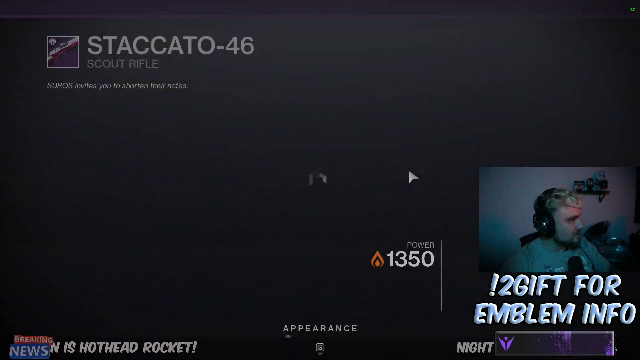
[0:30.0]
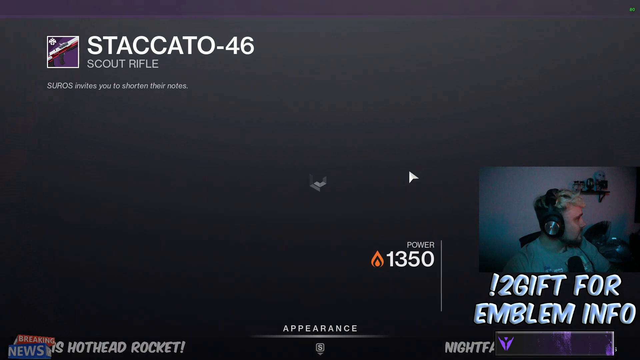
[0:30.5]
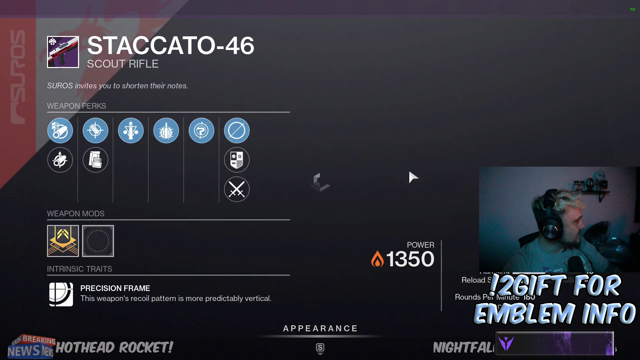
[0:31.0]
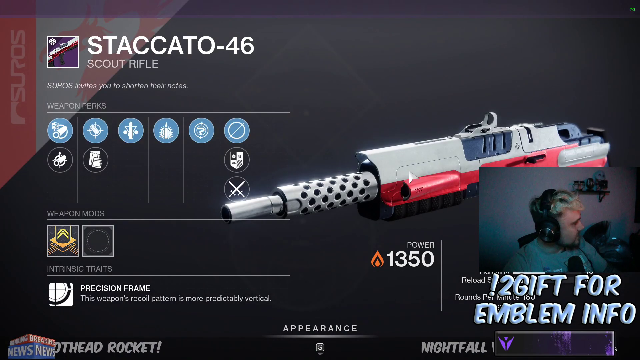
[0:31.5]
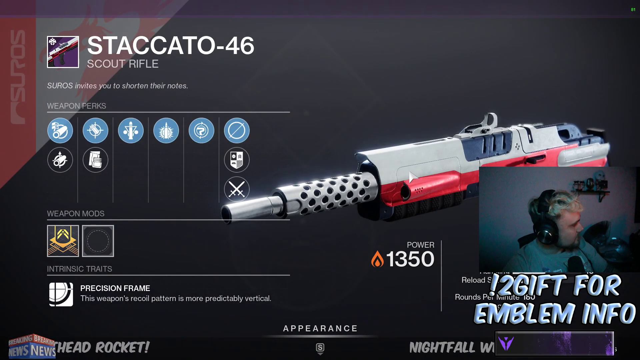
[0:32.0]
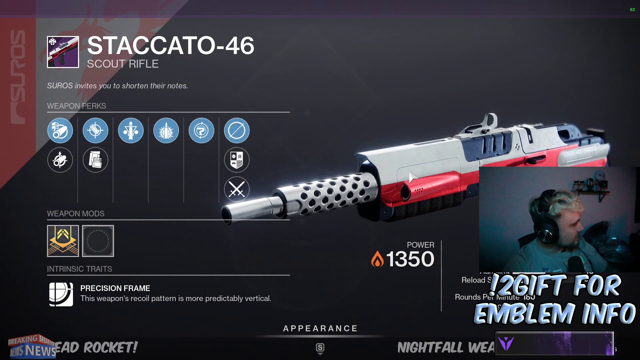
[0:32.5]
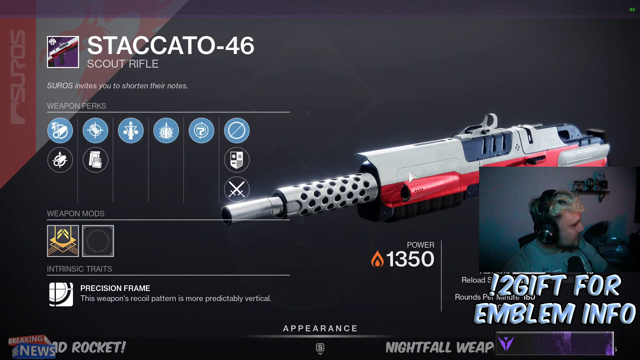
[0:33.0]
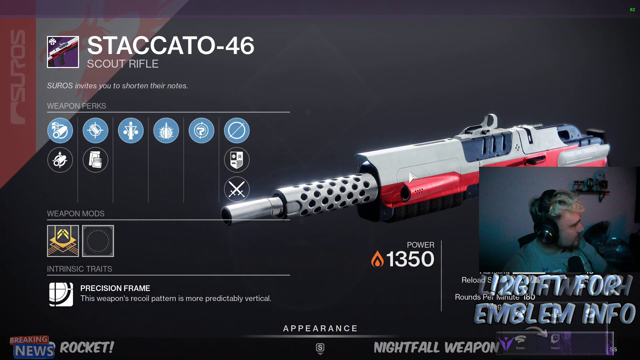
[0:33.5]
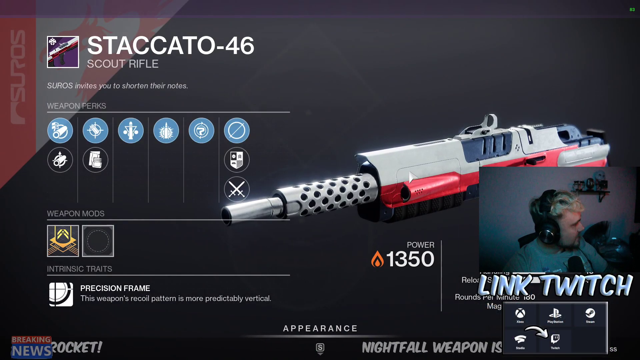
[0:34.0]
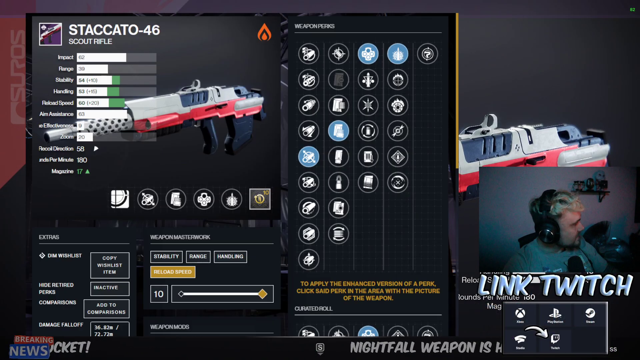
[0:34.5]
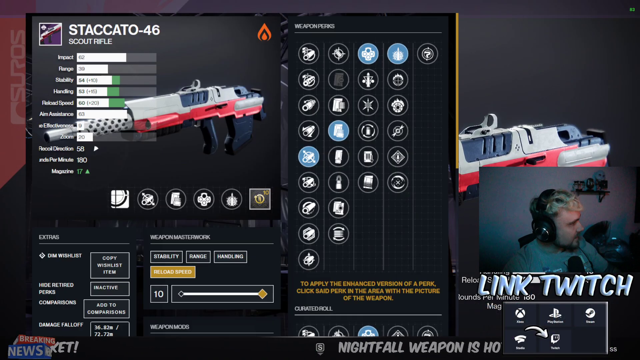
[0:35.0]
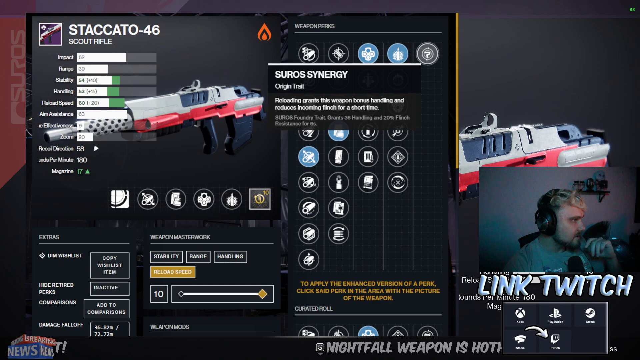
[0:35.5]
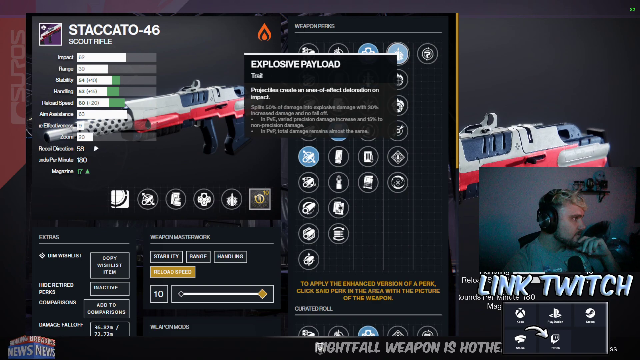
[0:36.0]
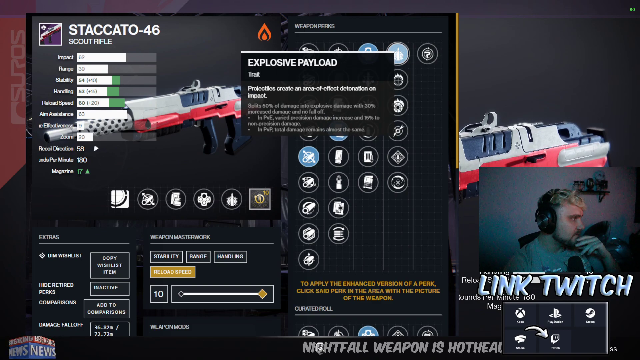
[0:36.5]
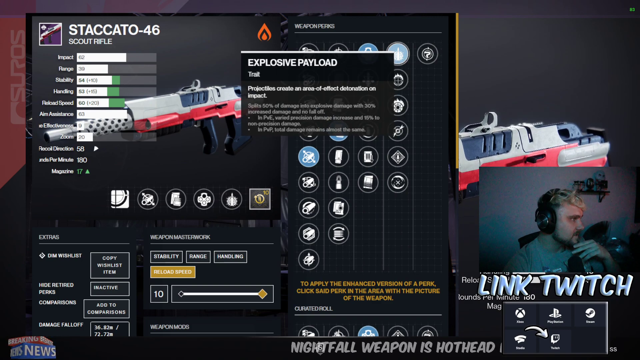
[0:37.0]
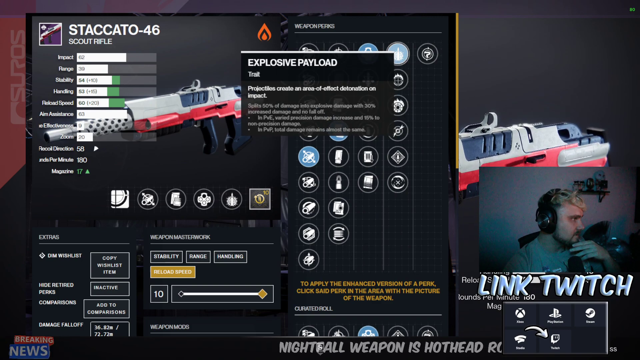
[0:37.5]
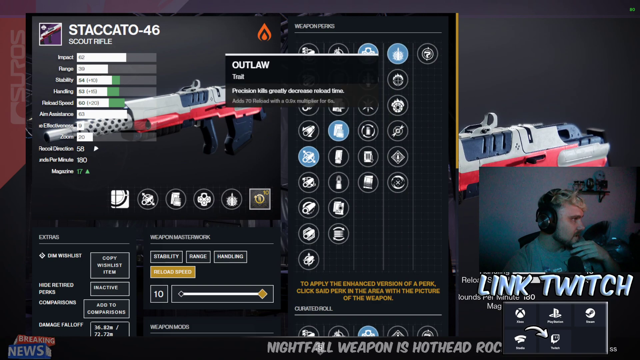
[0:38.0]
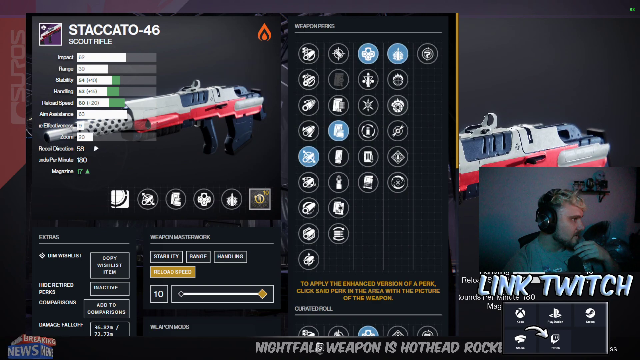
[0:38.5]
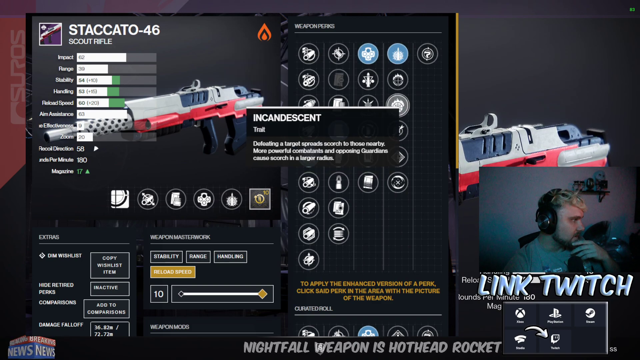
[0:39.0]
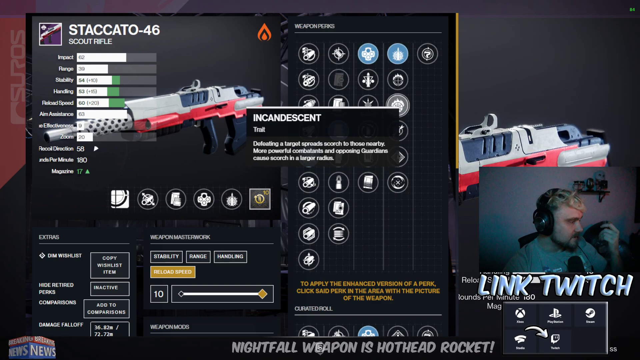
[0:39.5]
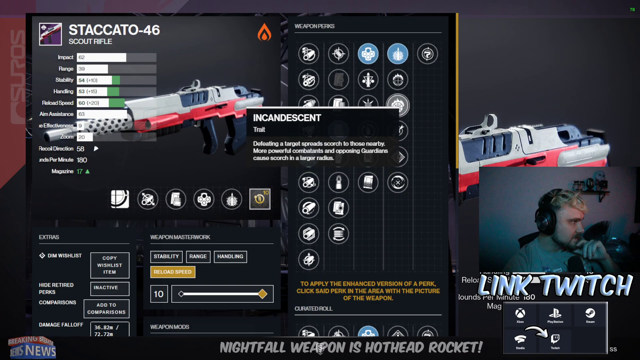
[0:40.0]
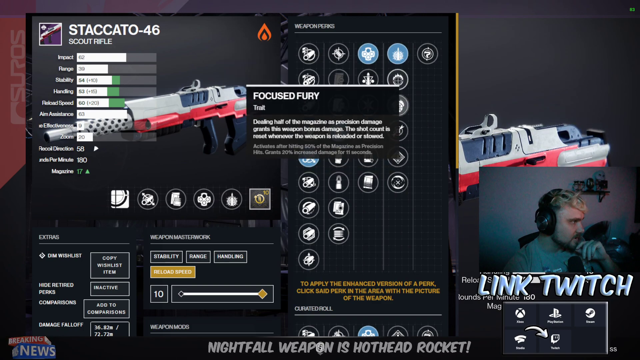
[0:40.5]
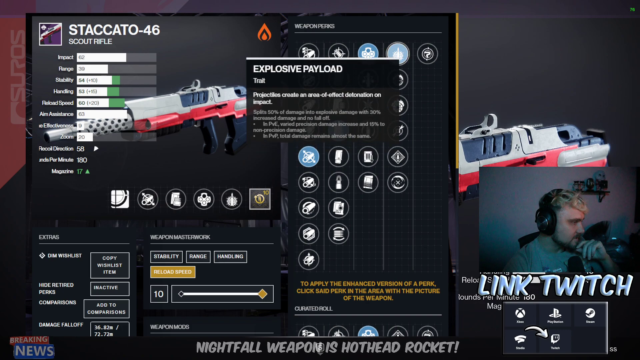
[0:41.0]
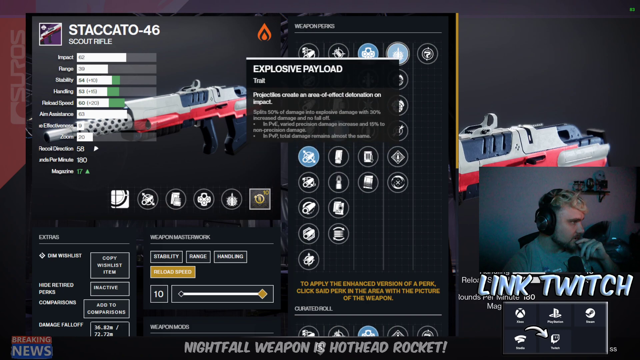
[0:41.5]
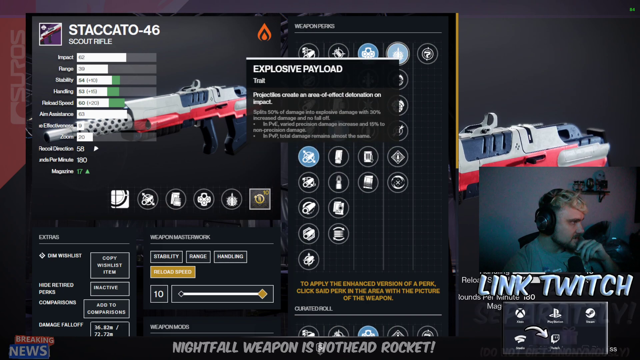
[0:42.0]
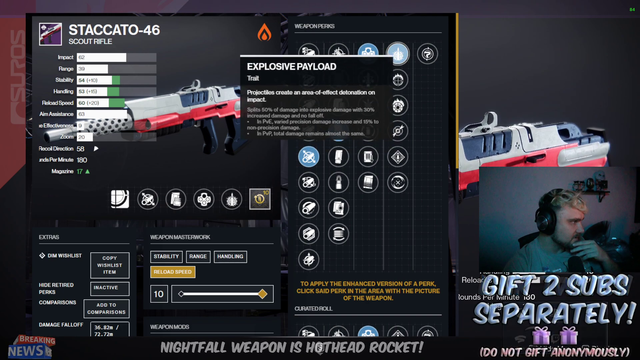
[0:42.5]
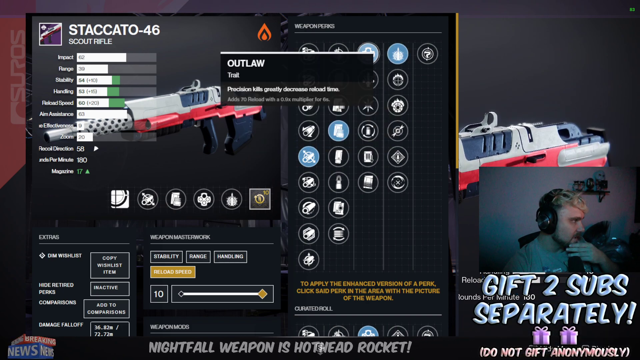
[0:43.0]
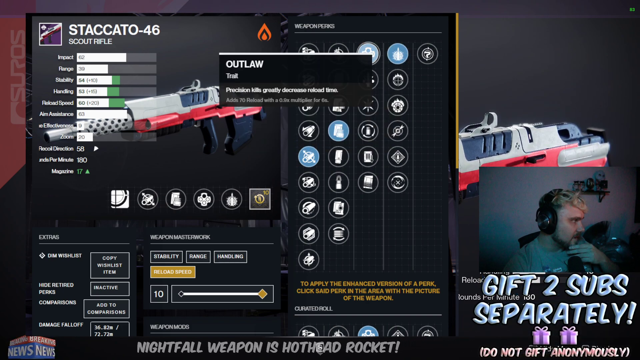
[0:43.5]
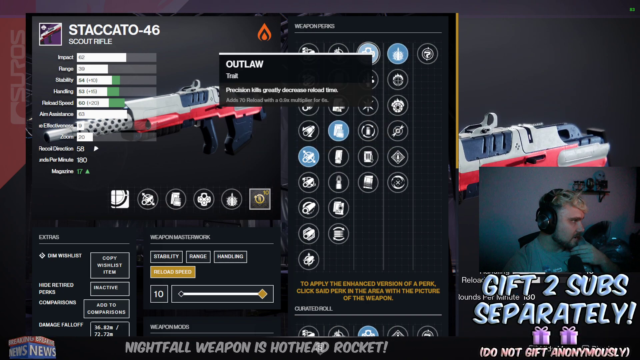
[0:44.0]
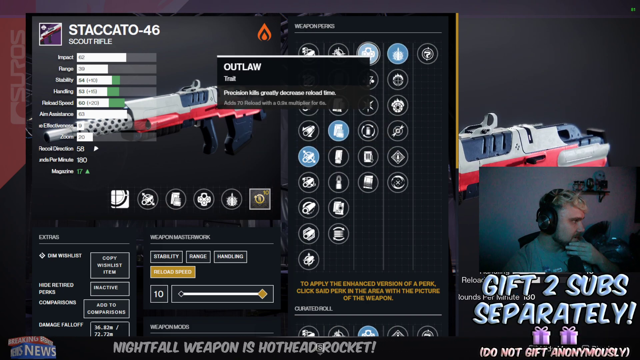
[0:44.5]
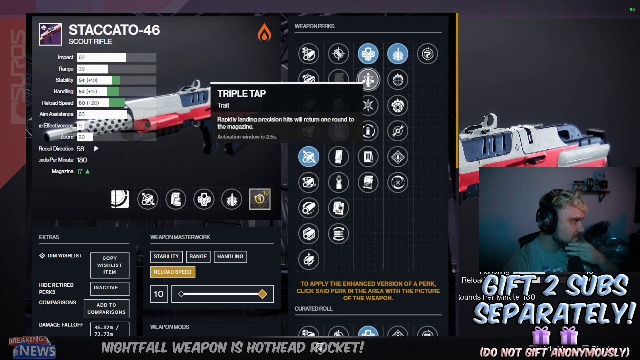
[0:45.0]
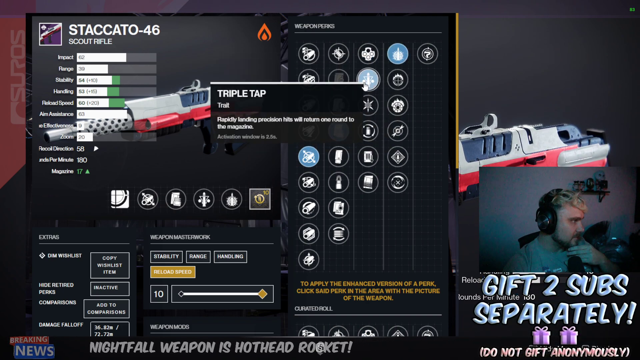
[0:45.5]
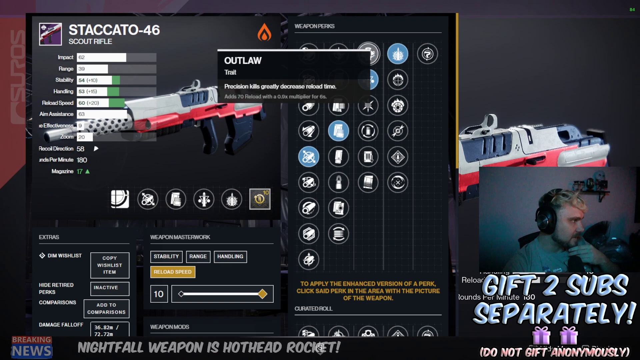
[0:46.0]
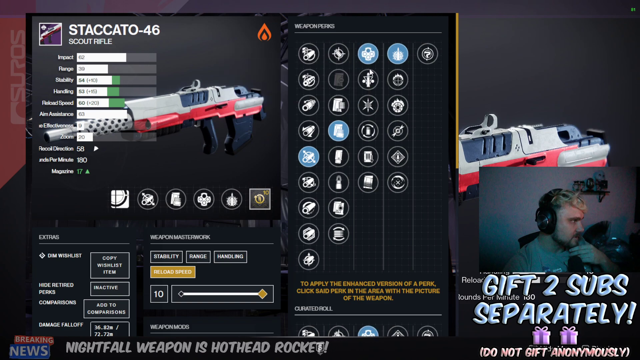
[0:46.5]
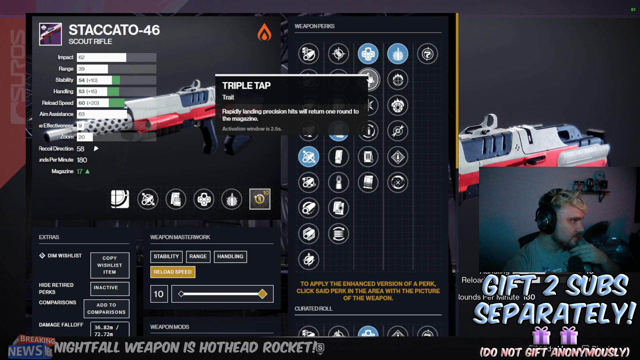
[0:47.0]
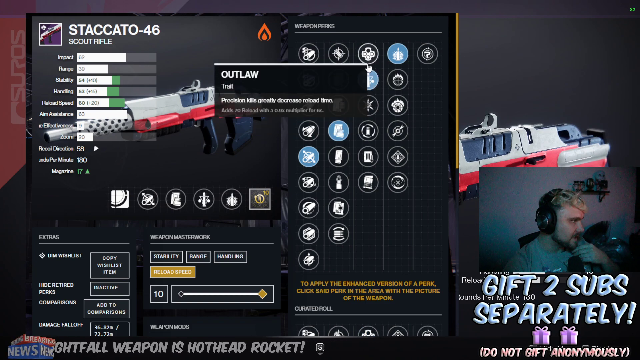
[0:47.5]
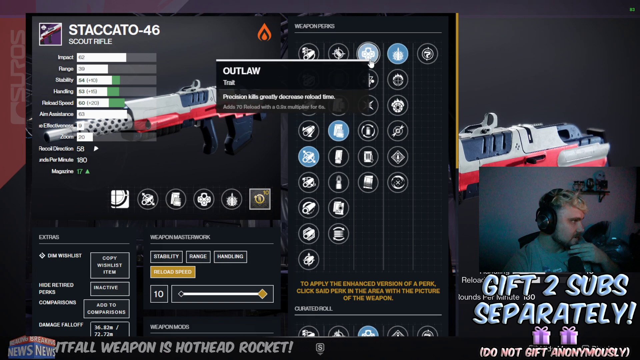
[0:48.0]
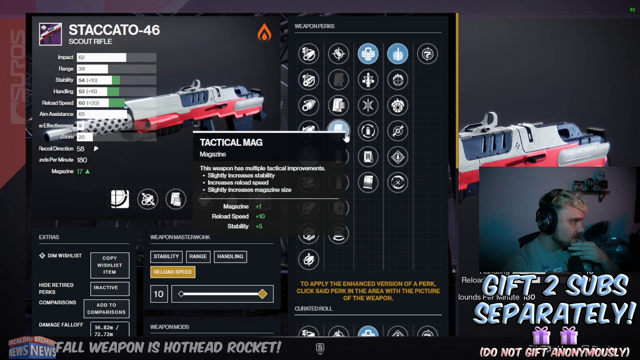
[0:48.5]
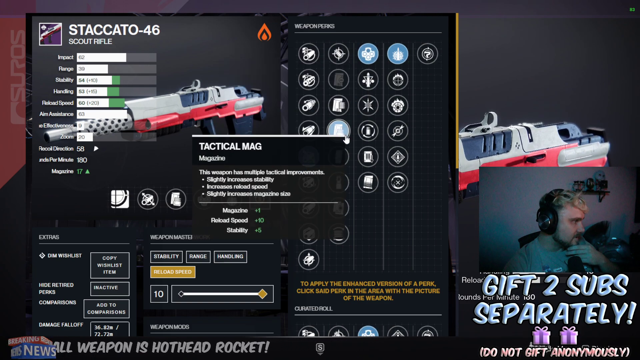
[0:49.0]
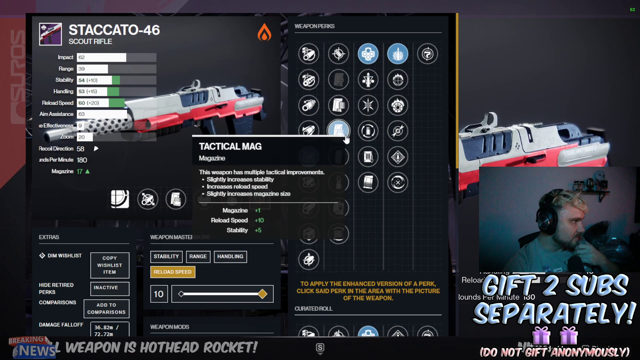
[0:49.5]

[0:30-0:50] The streamer opens the loadout page for the Staccato-46 Scout Rifle and points toward a perk called "Explosive Payload", which is labeled as a trait with the description "projectiles create an area of effect detonation on impact." On the left side are variables for the weapon such as impact range, stability, handling, reload speed, and aim assistance. At the bottom middle is "Weapon Masterwork", and beneath it, in a box outline, are stability, range, handling, and reload speed. He looks at other perks, such as "Focused Fury", another trait, then goes back to Explosive Payload. He points toward one called "Outlaw" and then moves between Outlaw and "Triple Tap", appearing to contemplate between the two. There are five vertical rows of different traits and perks. He seems to still be talking about what he wants to choose.